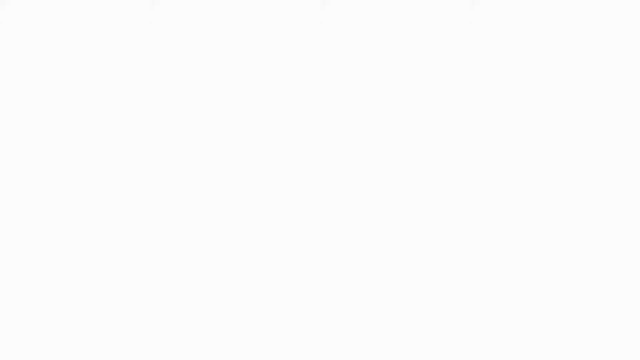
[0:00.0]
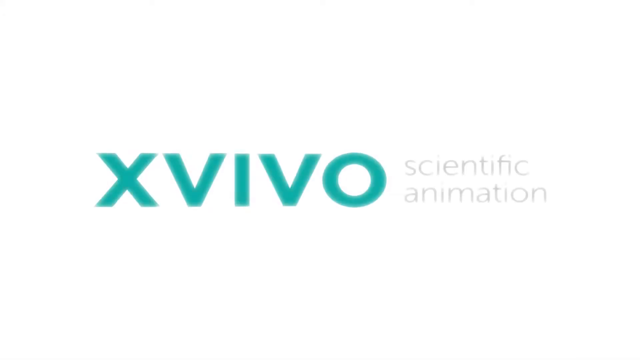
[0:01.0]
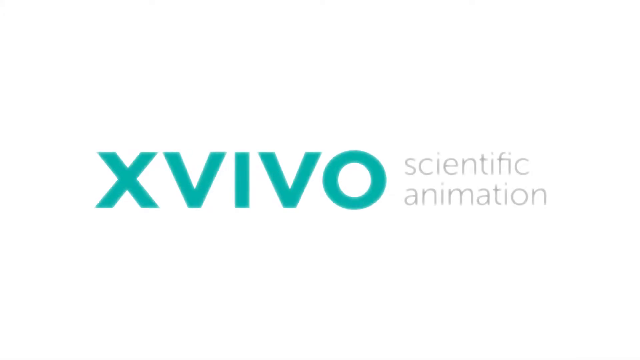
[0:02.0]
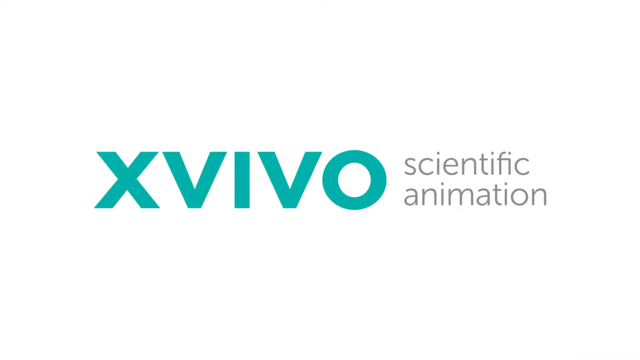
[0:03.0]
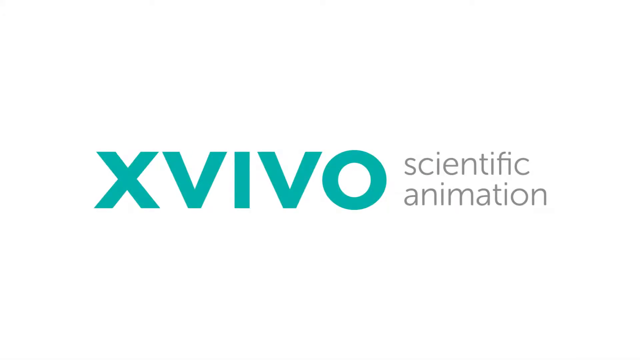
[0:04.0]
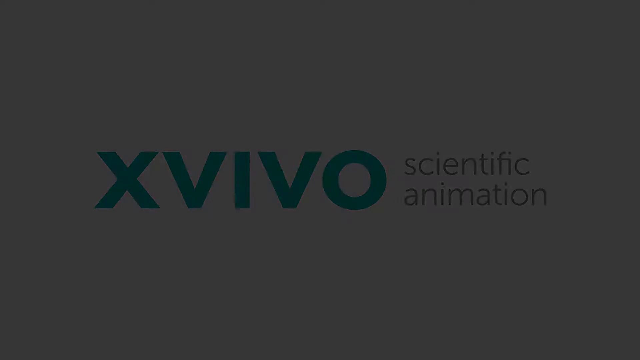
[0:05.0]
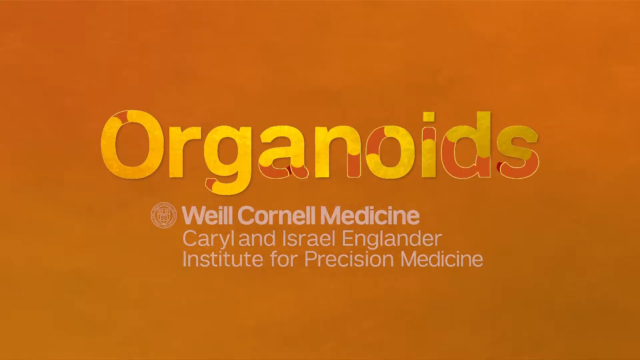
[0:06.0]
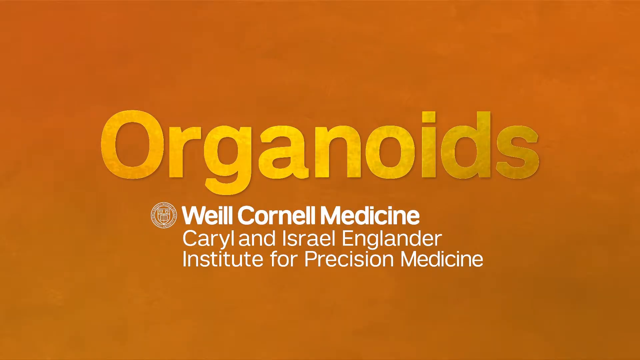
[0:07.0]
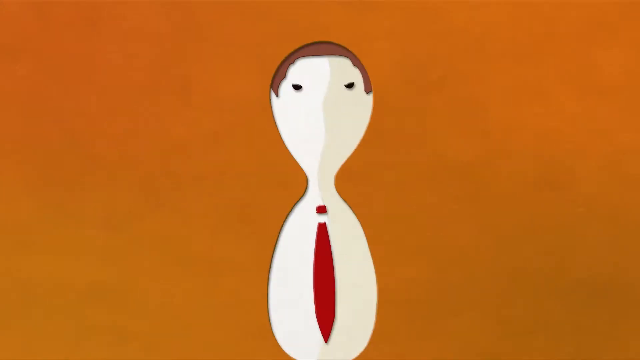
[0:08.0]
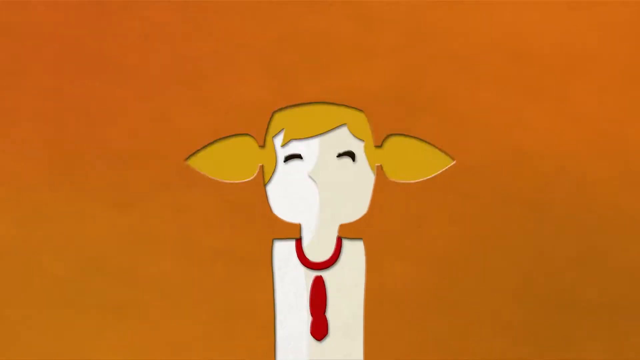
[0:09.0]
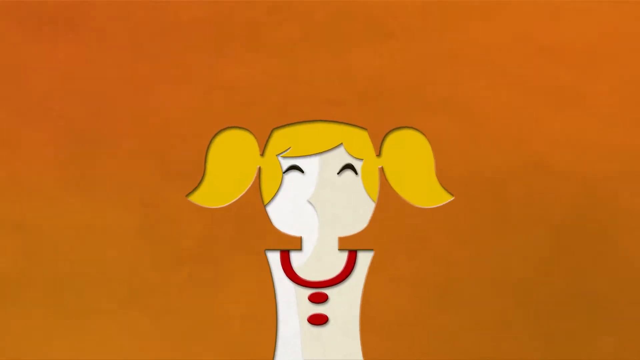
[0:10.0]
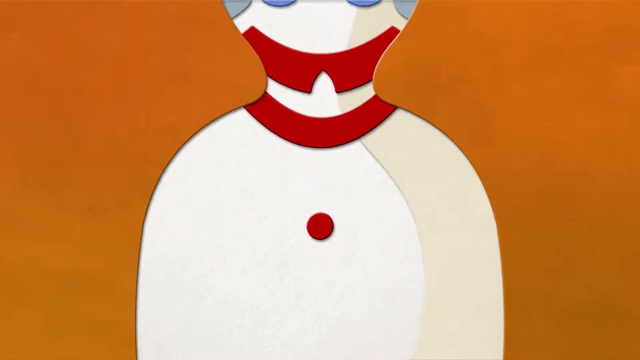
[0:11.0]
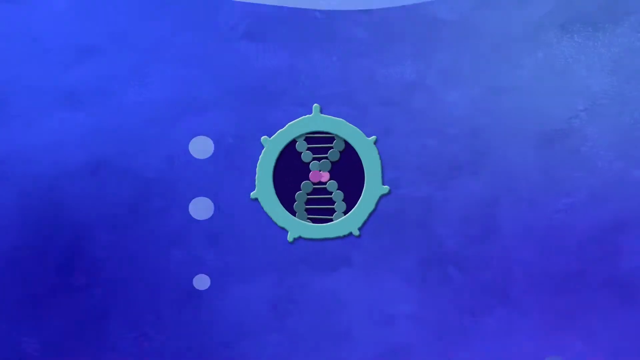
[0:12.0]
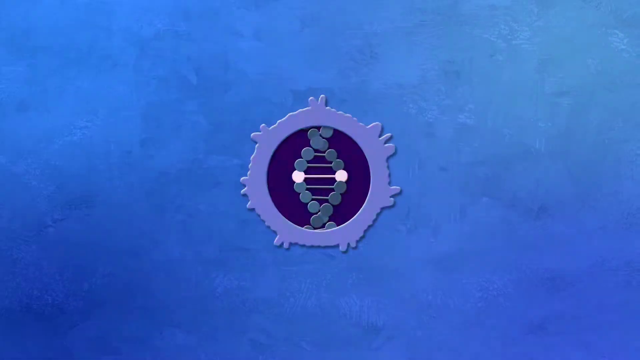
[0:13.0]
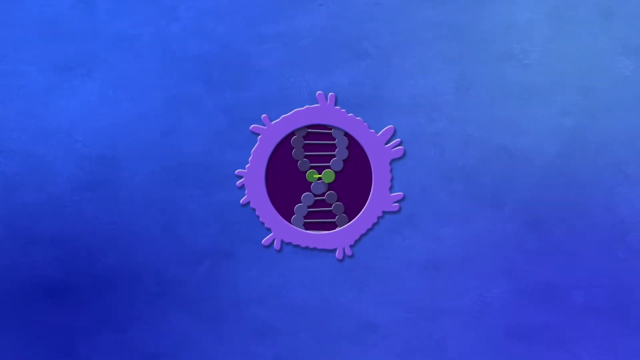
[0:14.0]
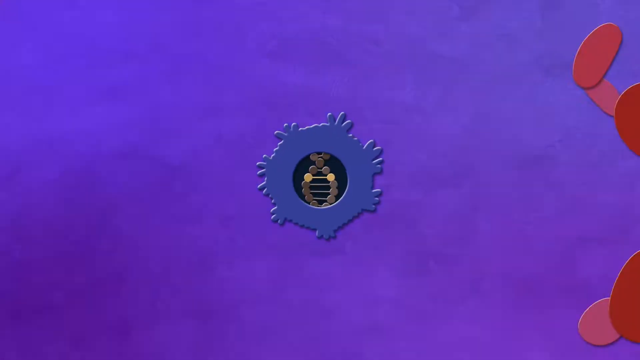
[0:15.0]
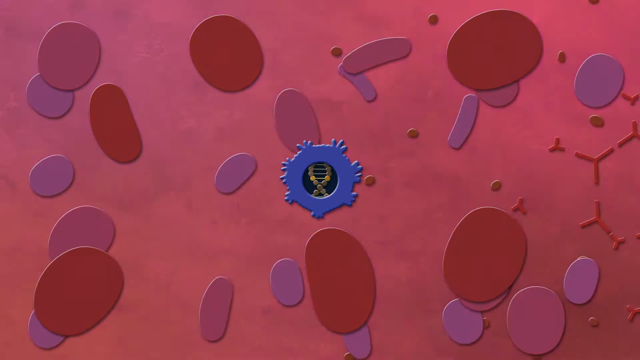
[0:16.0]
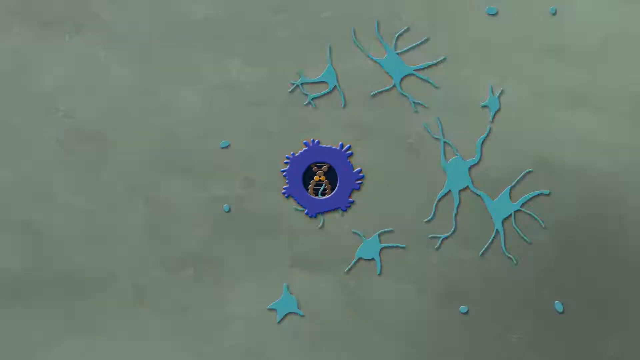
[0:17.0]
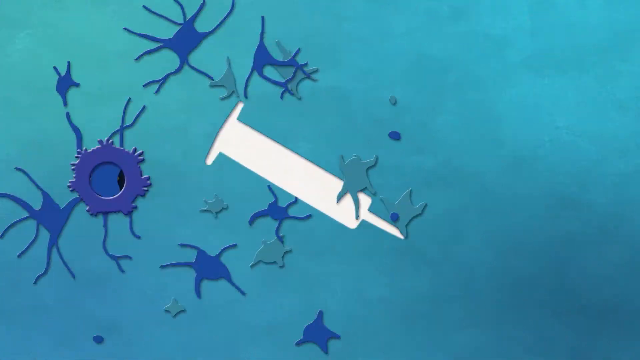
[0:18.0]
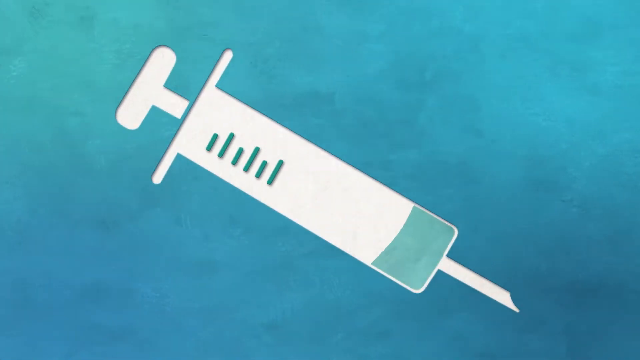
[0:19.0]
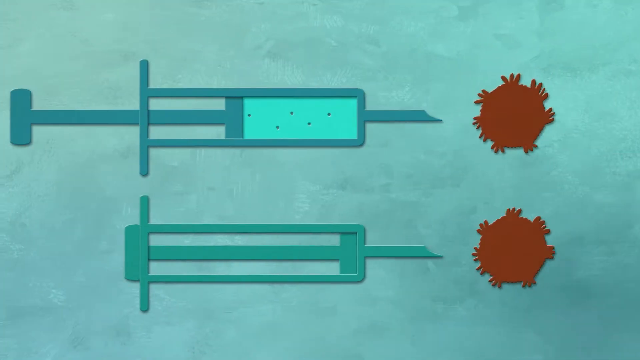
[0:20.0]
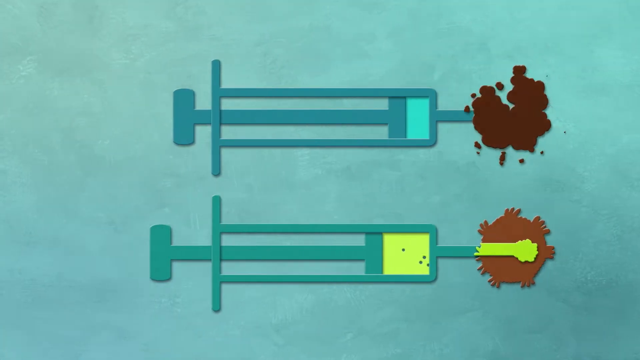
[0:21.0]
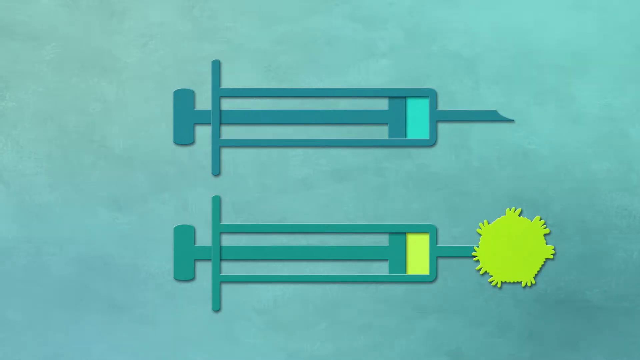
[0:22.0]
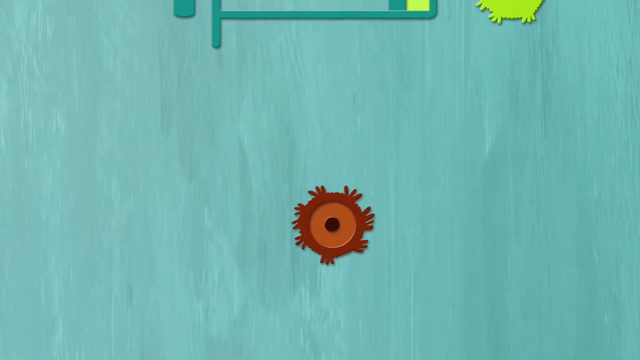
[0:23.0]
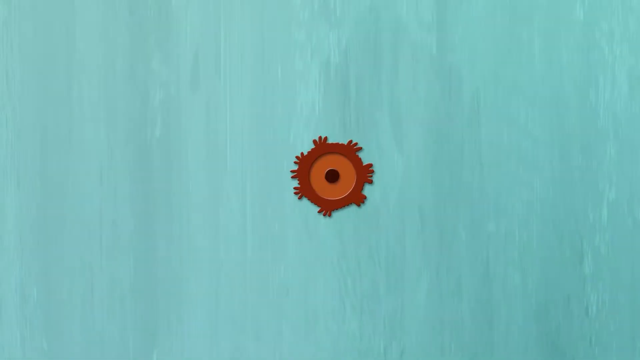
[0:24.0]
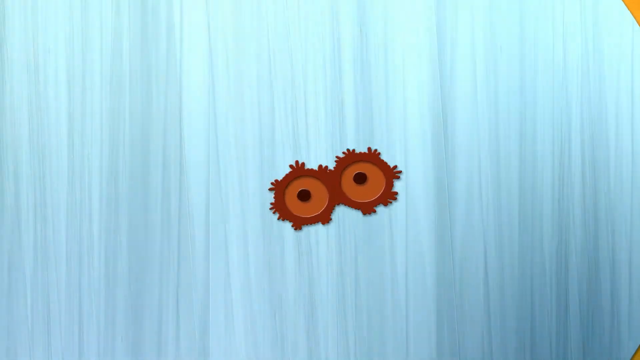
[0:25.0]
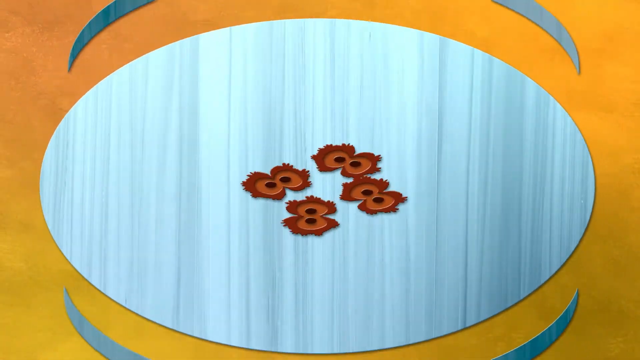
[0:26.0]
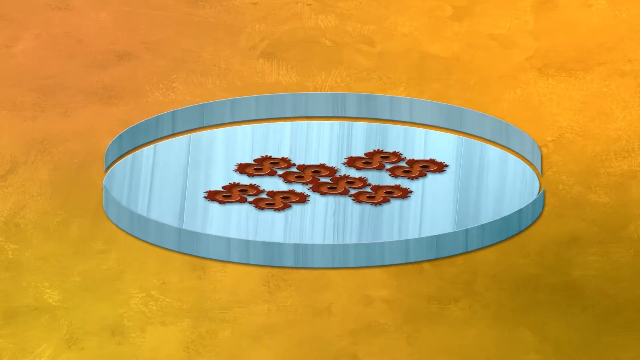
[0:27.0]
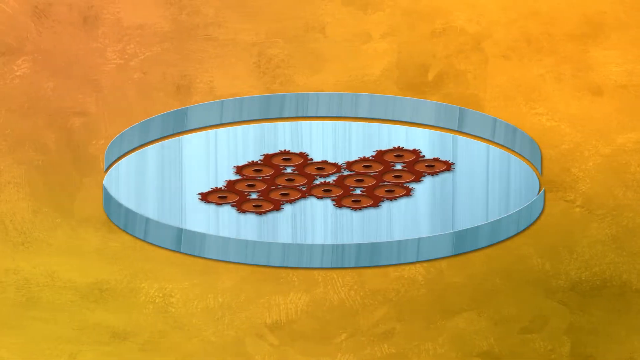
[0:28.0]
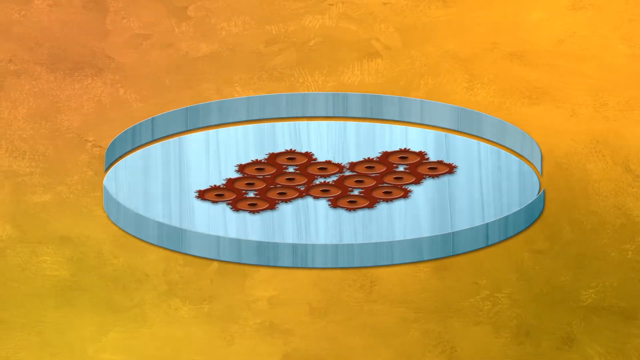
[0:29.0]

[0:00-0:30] The video opens on a white screen, and then text fades in reading "XVIVO" and "scientific animation"; it stays on screen, growing clearer and clearer, before fading to black. The screen then reappears with an orange backdrop and the word "organoids", with text at the bottom reading "Weill Cornell Medicine" and "Caryl and Israel Englander Institute for Precision Medicine", which stays on screen for a little while. A 2D man appears and turns into a little 2D girl with pigtails, who then turns into a 2D grandma with glasses. The view zooms in on the grandma, revealing that her blouse is some kind of underwater scene. A circular window, like one on a ship, appears, and inside it is some kind of DNA helix, which starts to change color. The helix stays on screen while the background changes from one scientific, inner-body type of structure to the next, such as mitochondria and cells. Suddenly a giant white syringe appears on the screen. It fills up and turns into two syringes, one on the top and one on the bottom, pointing at some cells, and the syringes go into the cells. The bottom syringe, which holds a yellow liquid, injects some of the yellow liquid into one of the cells. One cell then appears in the center of the screen and multiplies a lot, and the cells turn out to be on a petri dish. The graphics are some kind of mix of 3D and 2D animation.